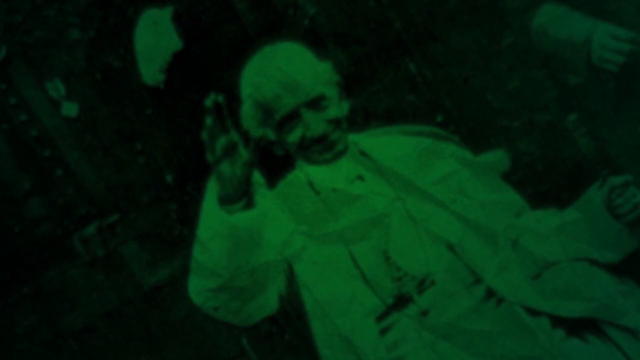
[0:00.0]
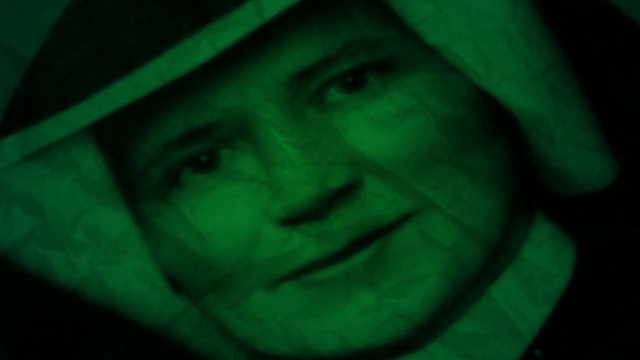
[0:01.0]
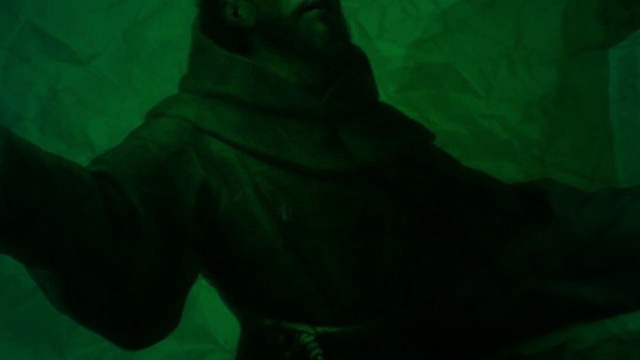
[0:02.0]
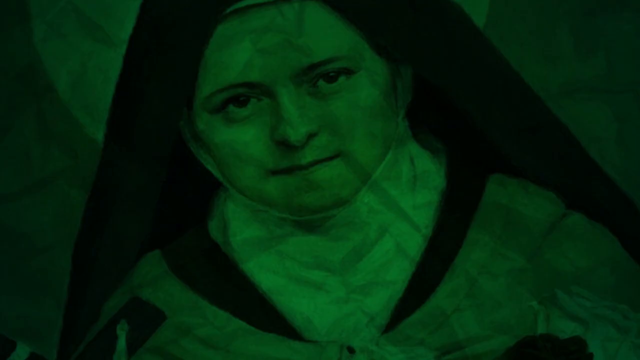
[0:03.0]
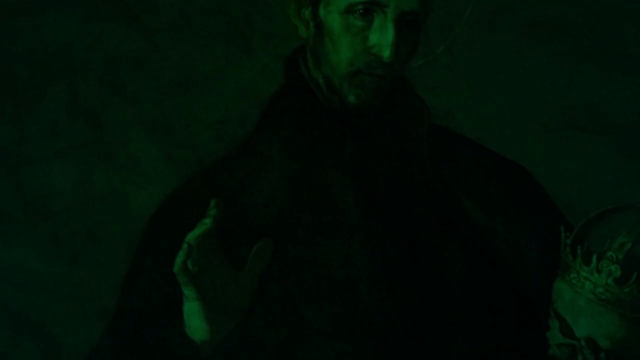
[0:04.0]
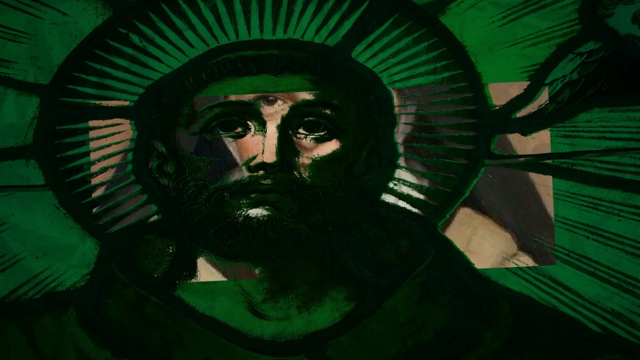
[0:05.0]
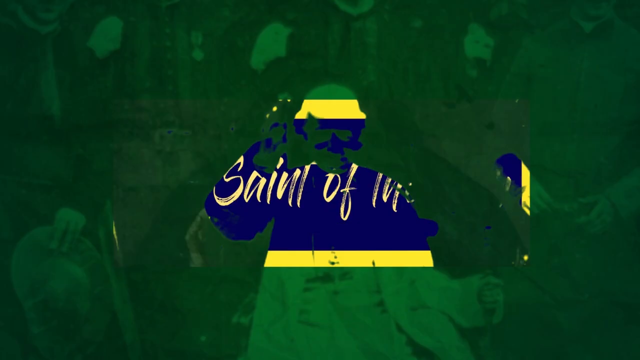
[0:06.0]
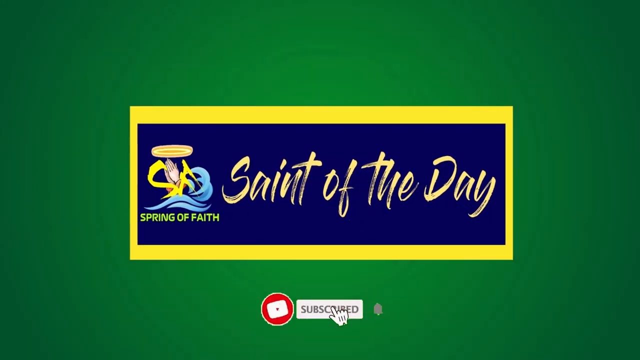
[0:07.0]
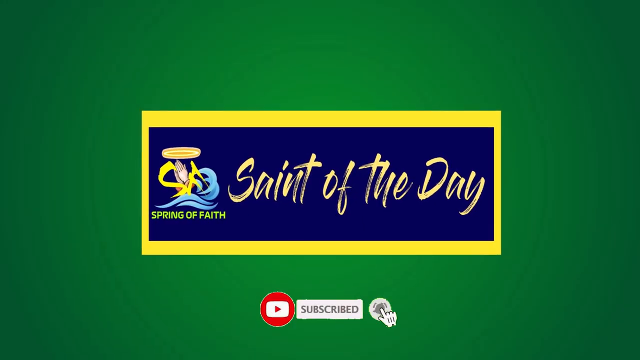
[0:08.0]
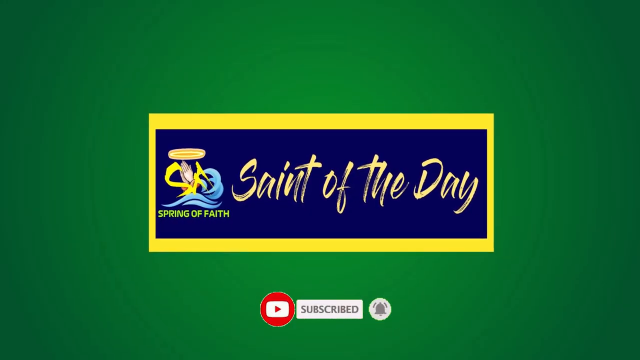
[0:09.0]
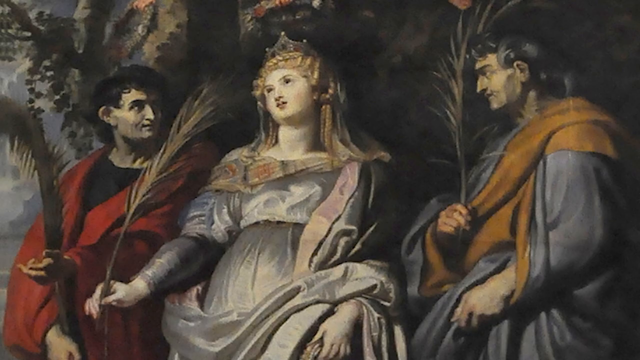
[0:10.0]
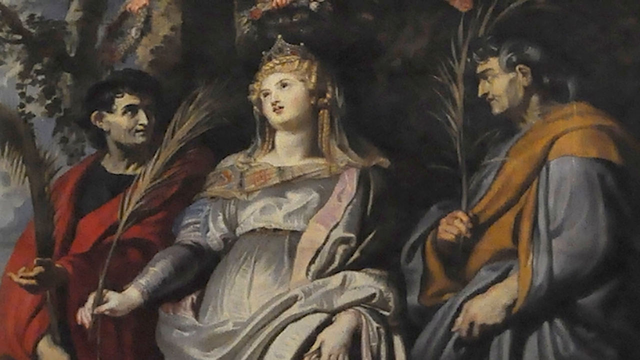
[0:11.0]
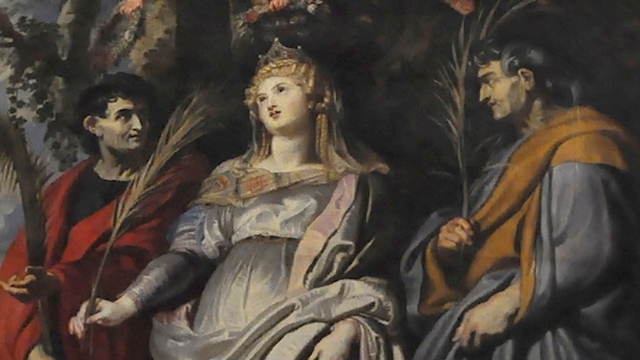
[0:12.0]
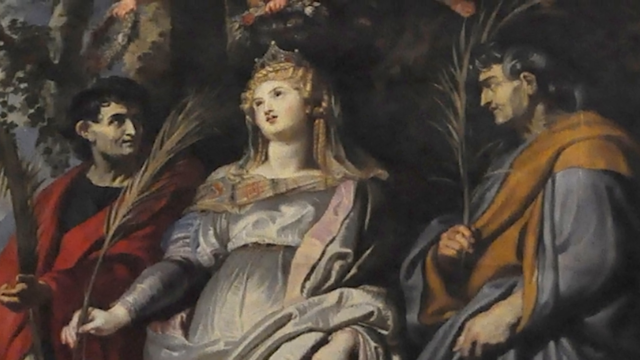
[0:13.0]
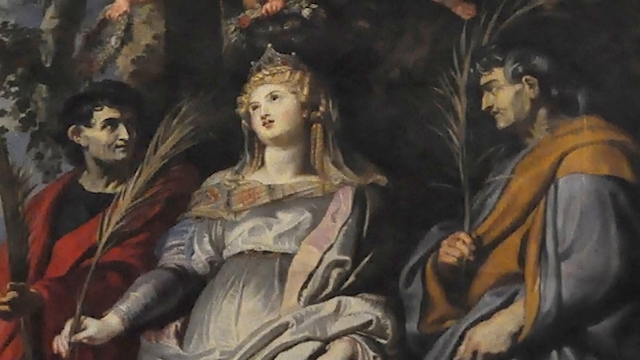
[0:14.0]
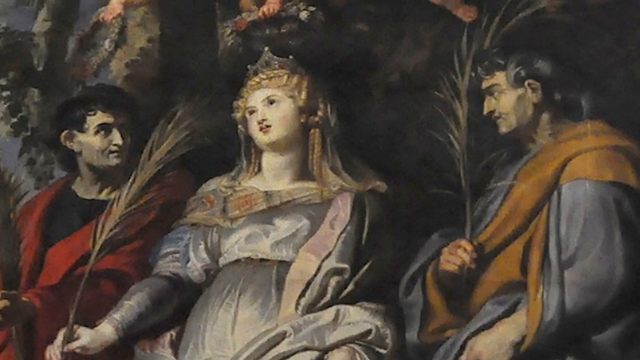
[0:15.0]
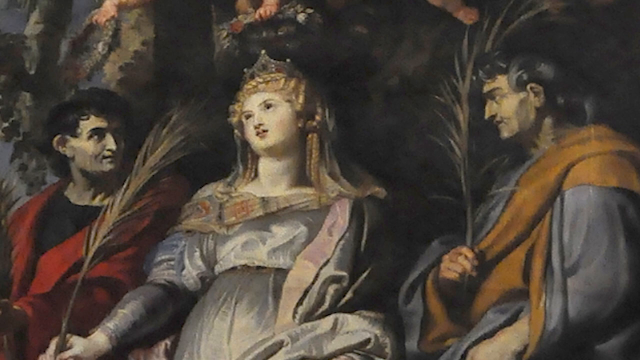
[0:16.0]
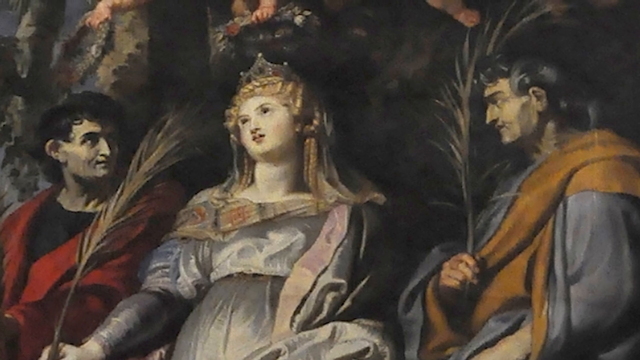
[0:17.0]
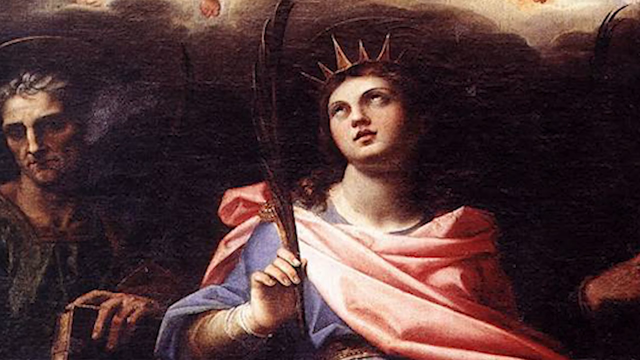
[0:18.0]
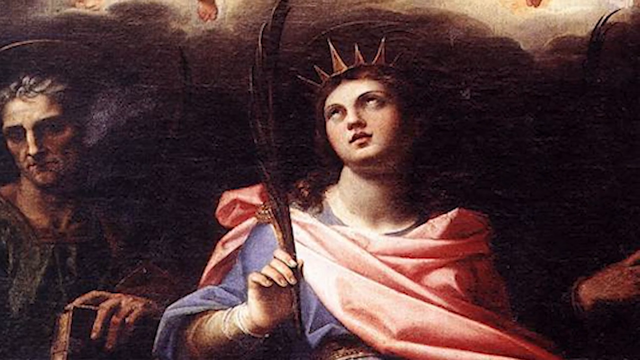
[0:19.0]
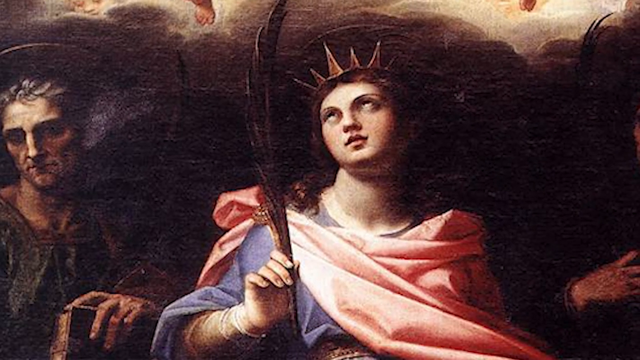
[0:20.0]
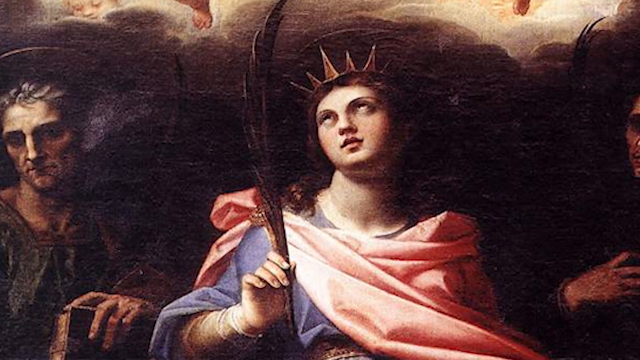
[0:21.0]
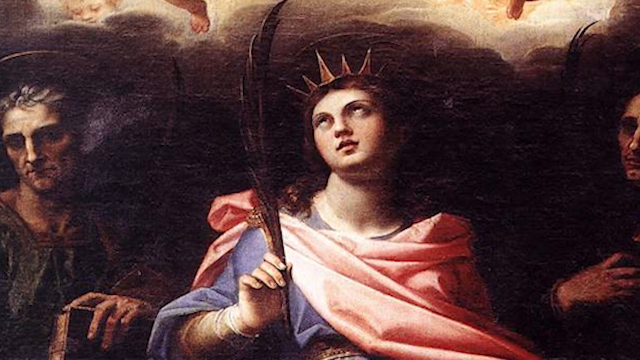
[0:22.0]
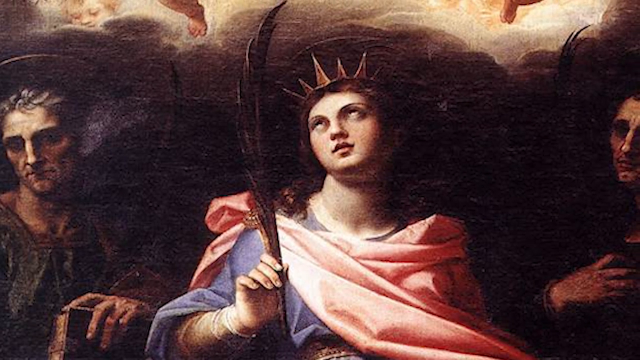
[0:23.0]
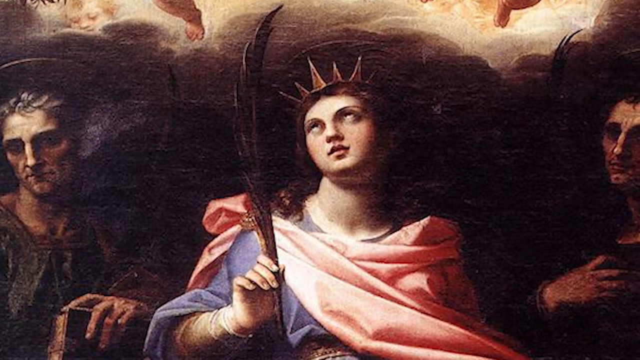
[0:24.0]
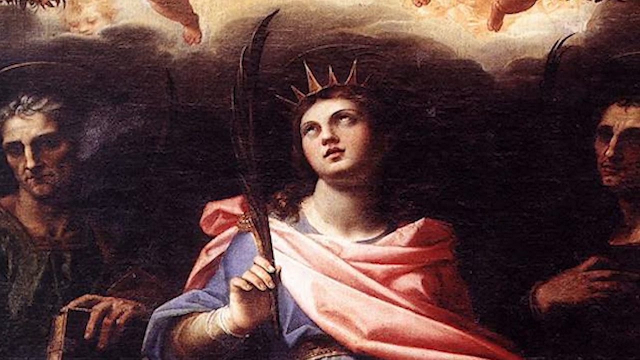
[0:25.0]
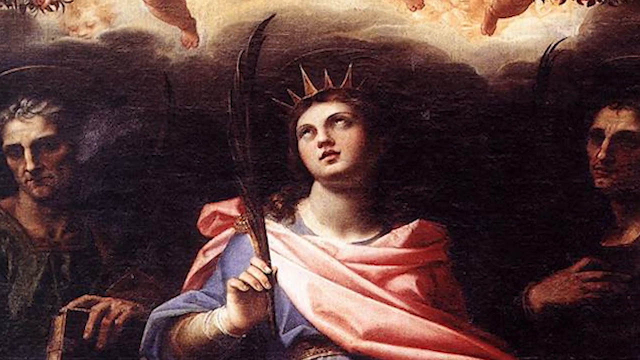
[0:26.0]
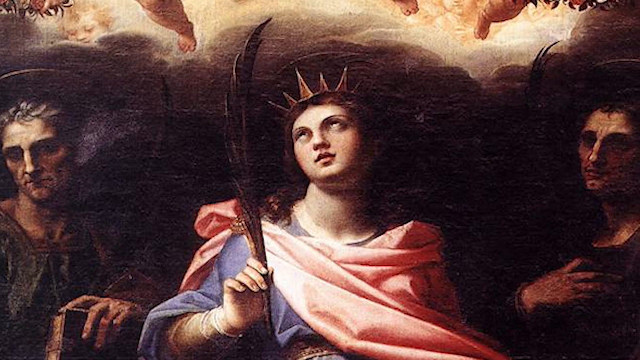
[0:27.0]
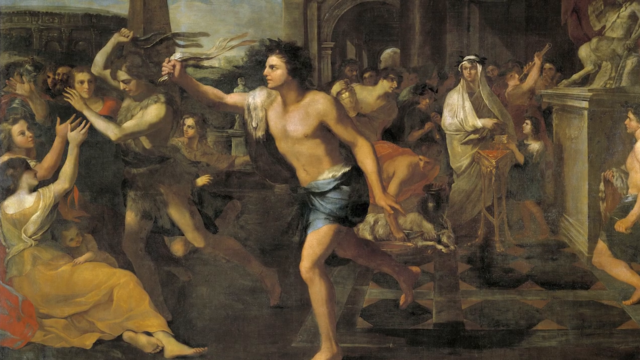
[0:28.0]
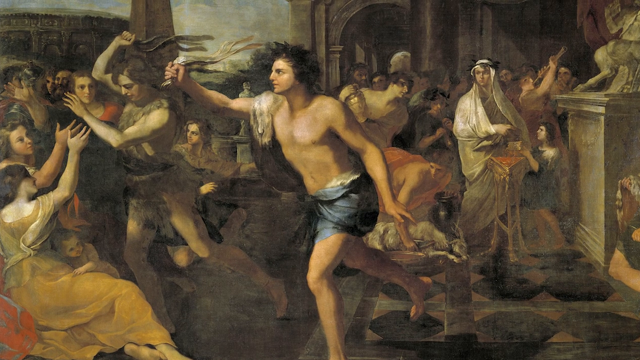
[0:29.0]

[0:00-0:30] The video opens with a rapid succession of many different historical images, all in green, flashing by on the screen very quickly; it looks like the title sequence for some sort of video series. Towards the end of the sequence, a box appears in the centre of the screen, blue in the middle and yellow on the outside, with the words "Saint of the Day" written inside it in yellow. To the left of this text is an image of hands clasped together underneath a halo, and beneath this image are the words "Spring of Faith" in capital letters. Below the box, the YouTube subscribe button appears with a mouse hovering over it. Still images of old paintings follow, the first showing a lady with long blonde hair who appears to be wearing a crown, surrounded by two men holding long leaves.